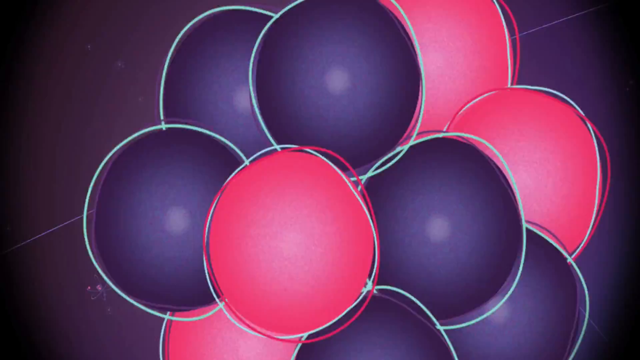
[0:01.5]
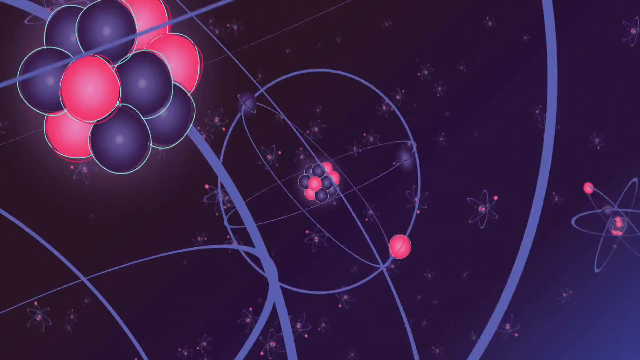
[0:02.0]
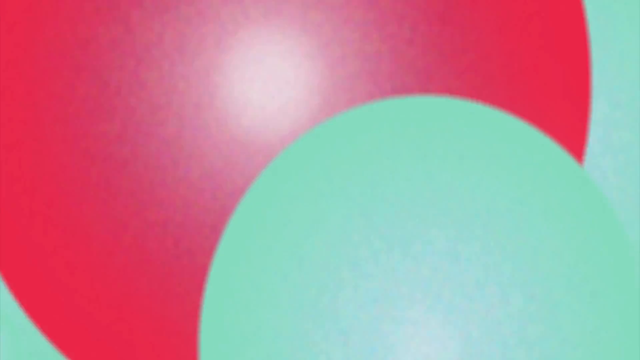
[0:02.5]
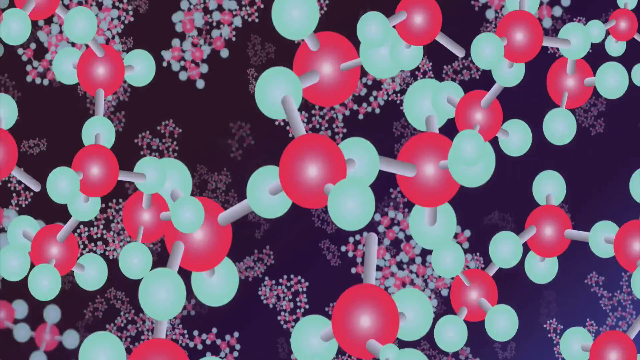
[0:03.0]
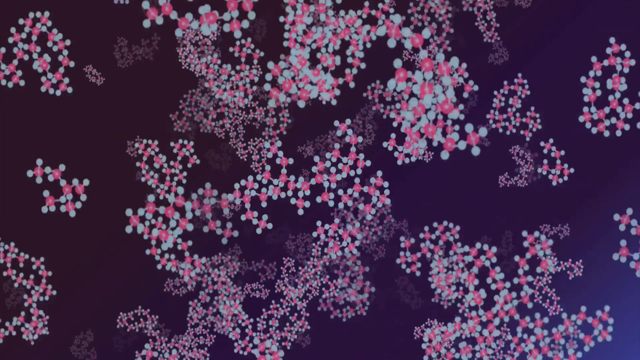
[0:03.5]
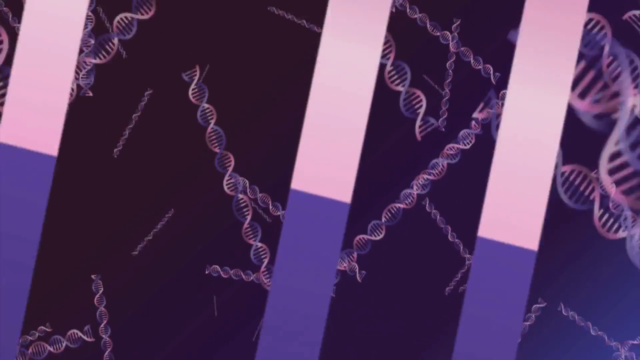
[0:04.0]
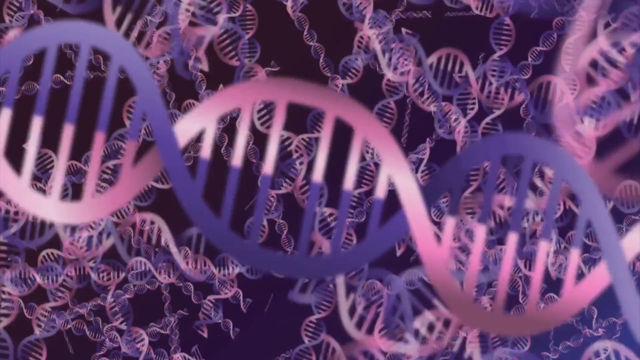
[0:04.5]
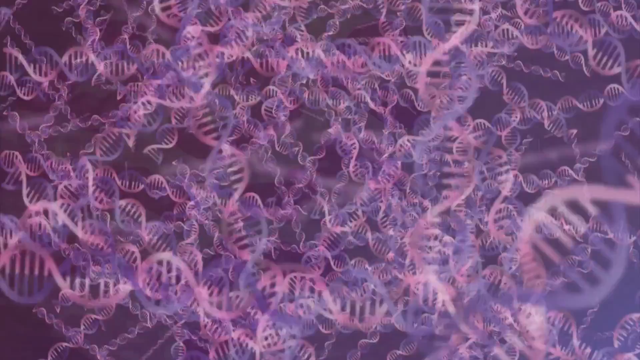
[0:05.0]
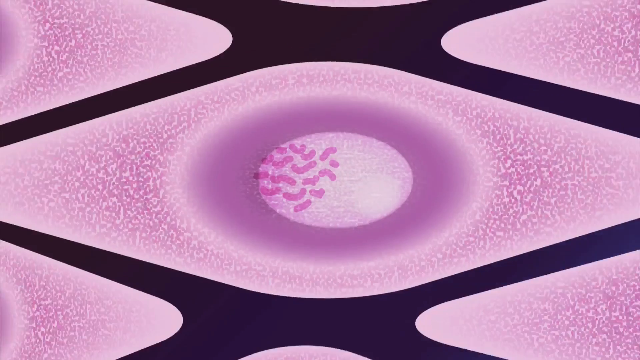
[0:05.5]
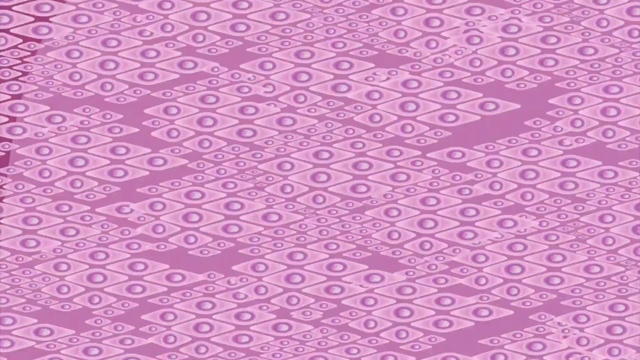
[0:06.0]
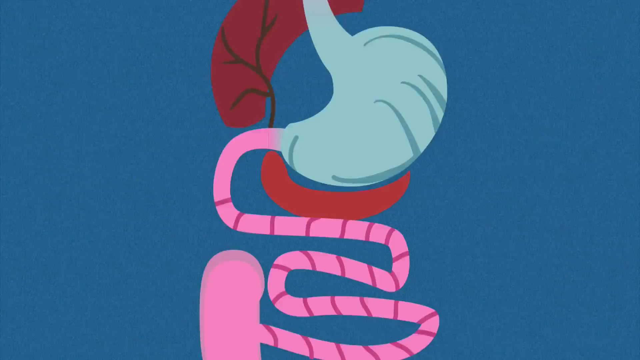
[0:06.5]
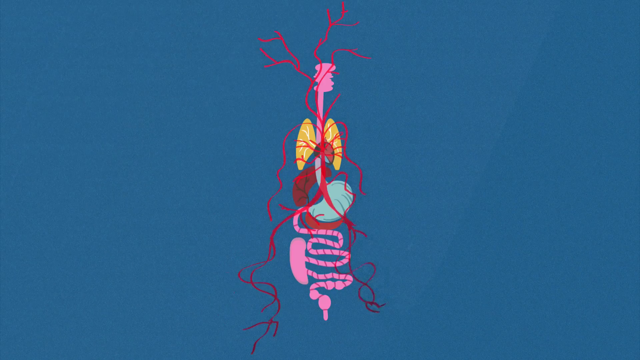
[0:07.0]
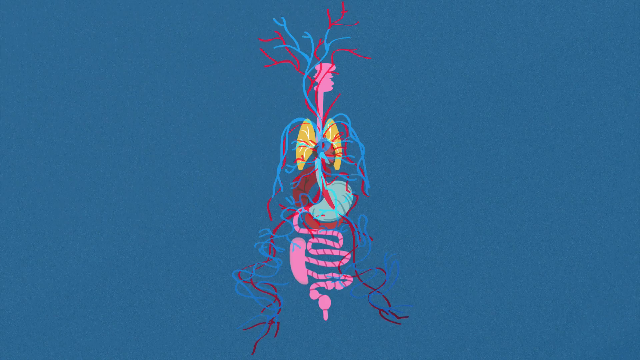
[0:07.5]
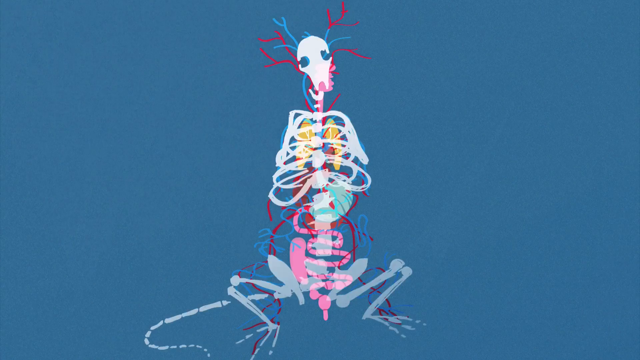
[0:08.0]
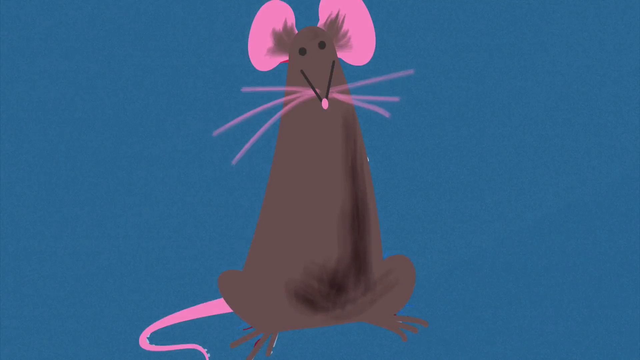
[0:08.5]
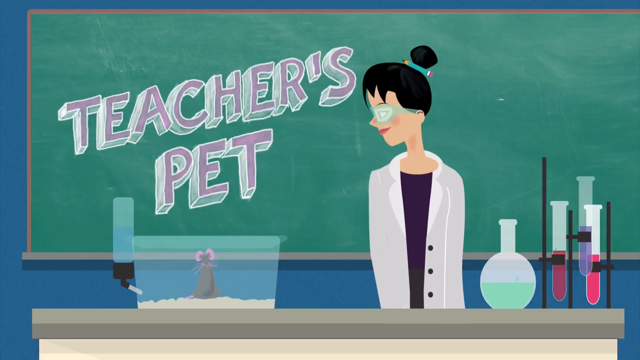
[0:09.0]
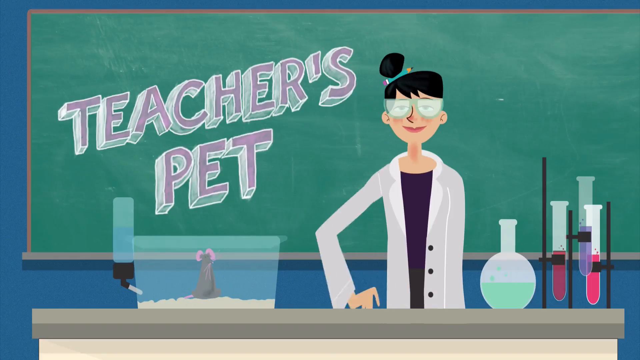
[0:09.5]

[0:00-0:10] Against a black background are what look to be different molecules, black and red with white outlines, with very elongated blue ovals around them. The view continues zooming past other molecules; some move farther apart while others come closer together. Molecules in white and red appear, all joined to each other by connecting lines. Blue and pink DNA patterns follow, then bacteria under a microscope. Next come diamonds, little cells, and then organs, which are overlaid with veins and nerves. A skeleton appears, followed by the skin of a mouse. The view zooms out even farther to show a cartoon woman by a green board.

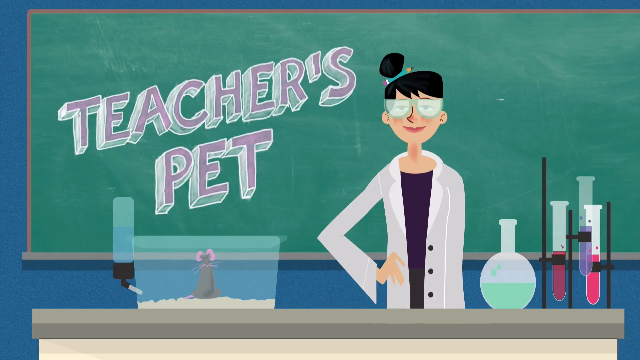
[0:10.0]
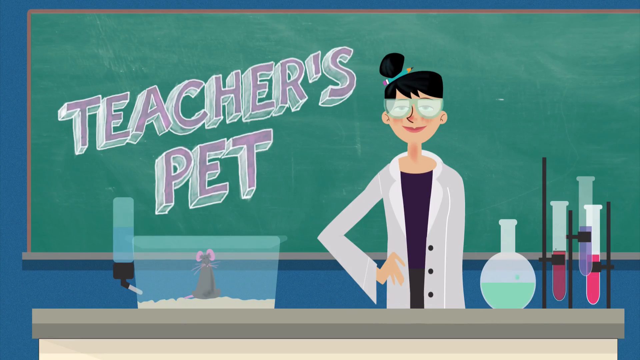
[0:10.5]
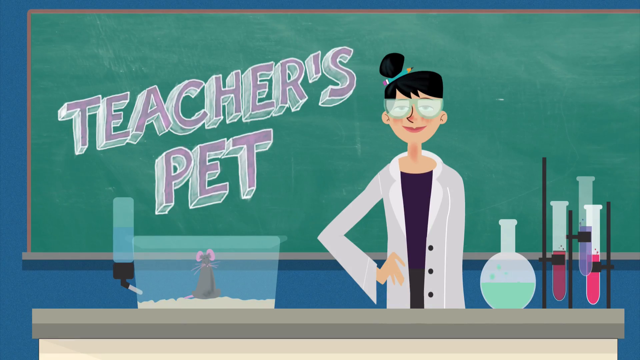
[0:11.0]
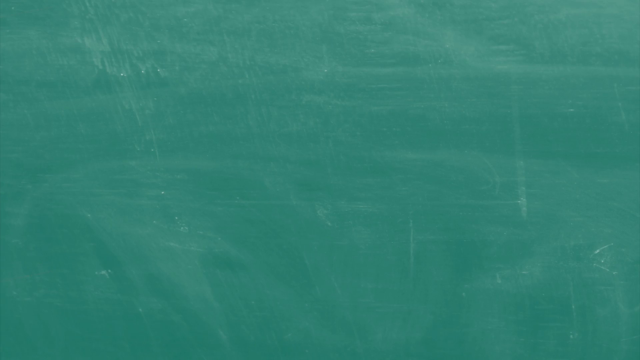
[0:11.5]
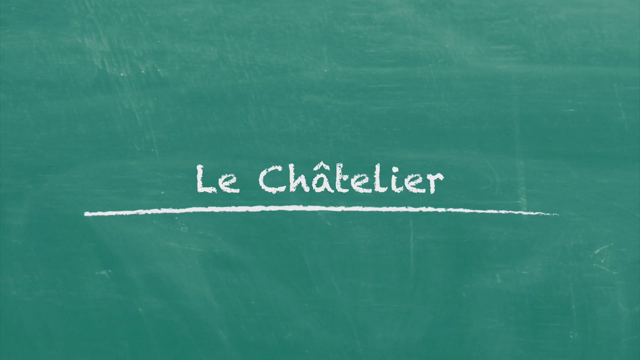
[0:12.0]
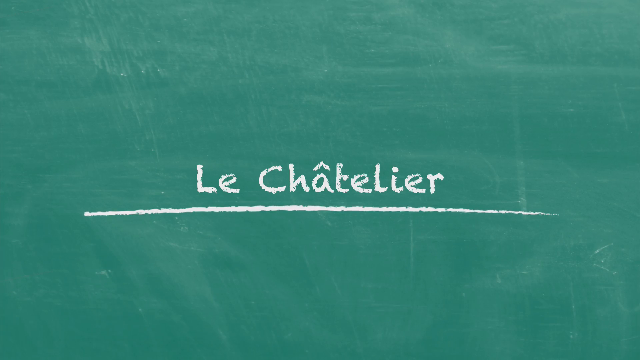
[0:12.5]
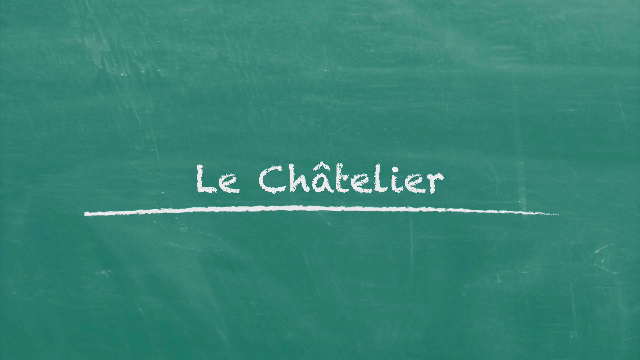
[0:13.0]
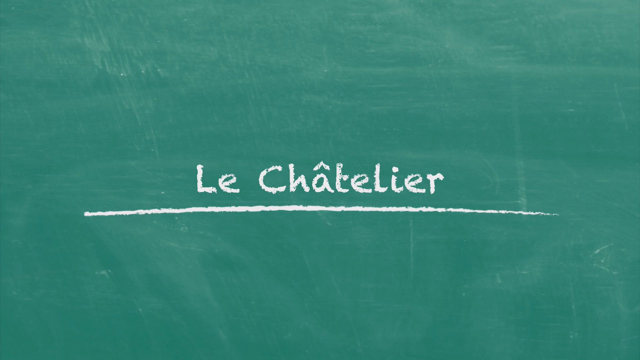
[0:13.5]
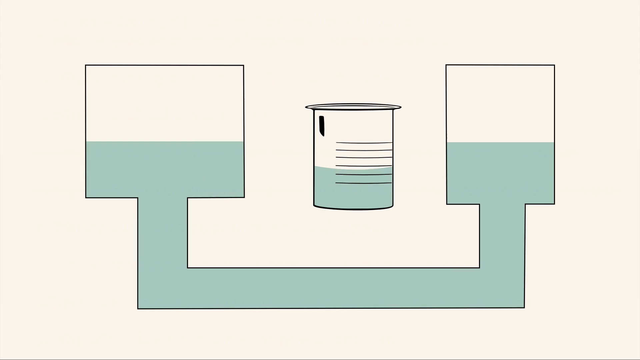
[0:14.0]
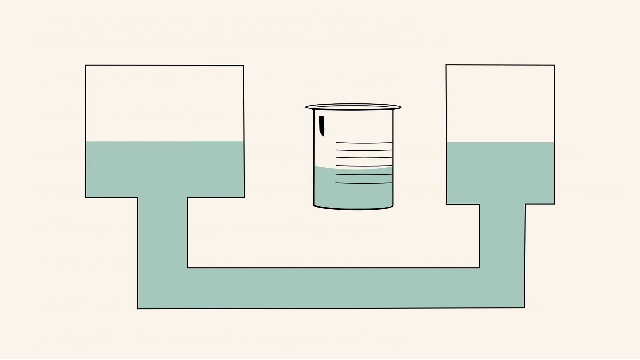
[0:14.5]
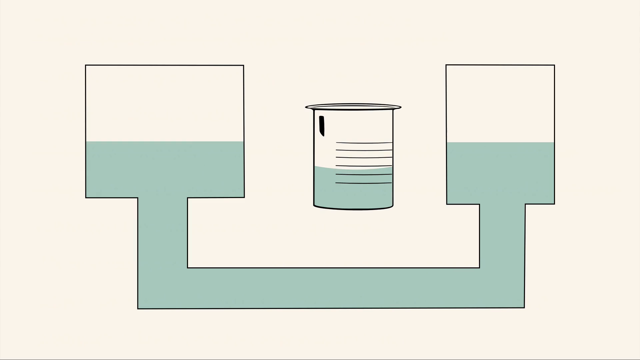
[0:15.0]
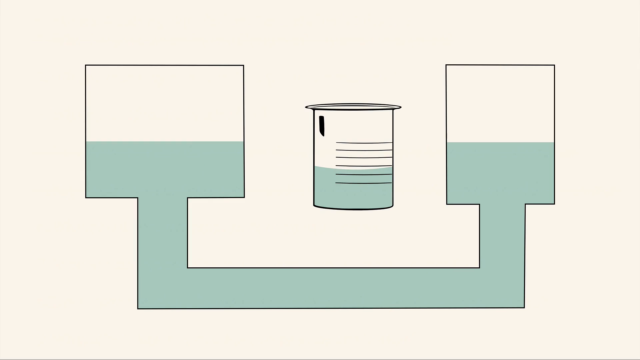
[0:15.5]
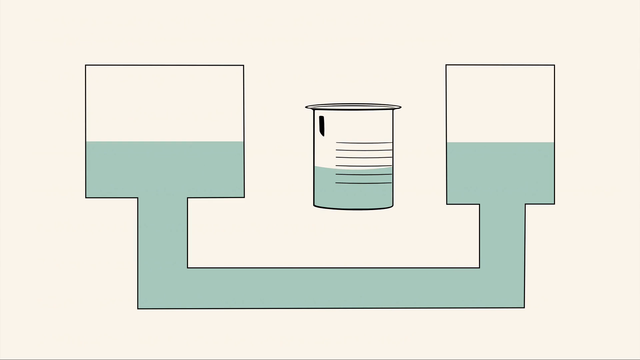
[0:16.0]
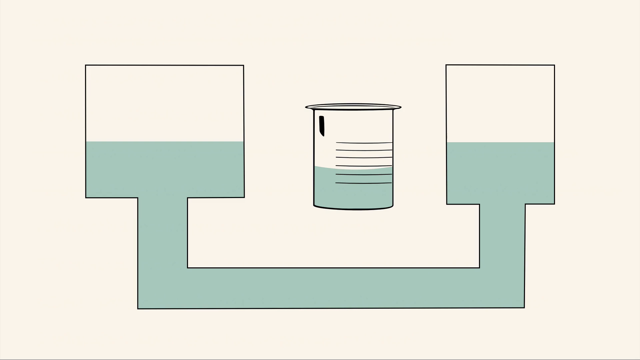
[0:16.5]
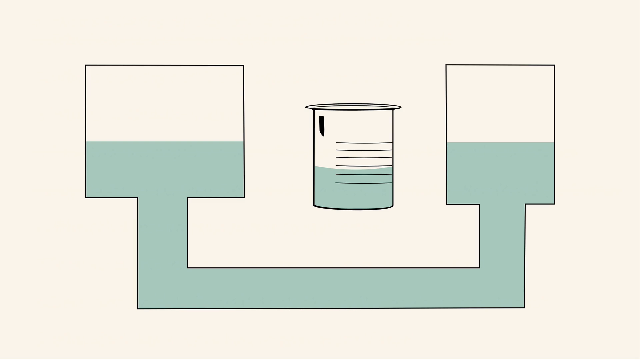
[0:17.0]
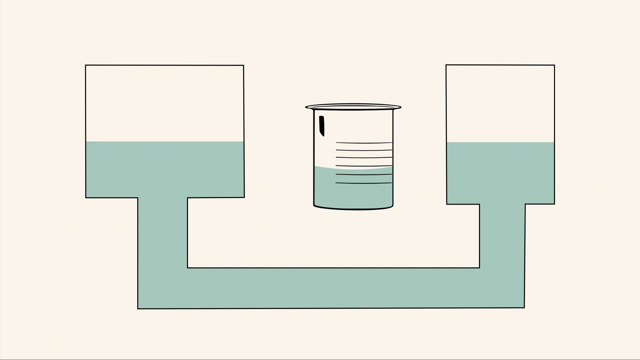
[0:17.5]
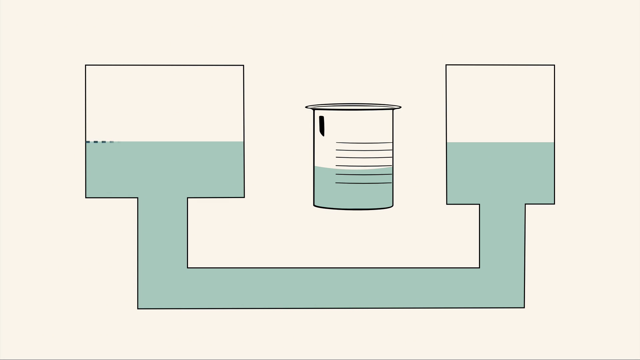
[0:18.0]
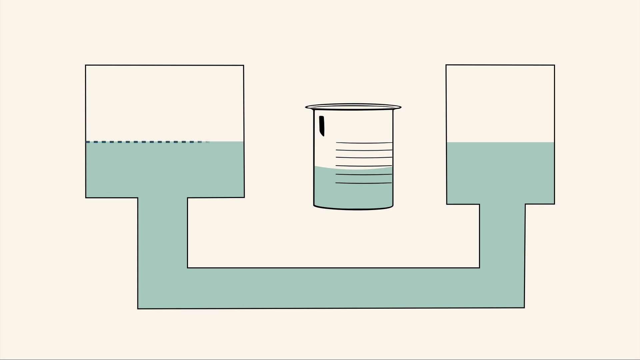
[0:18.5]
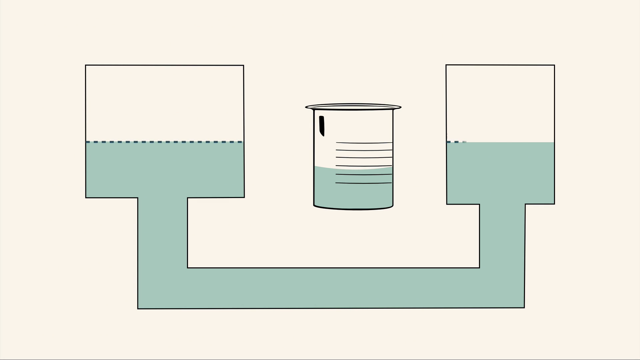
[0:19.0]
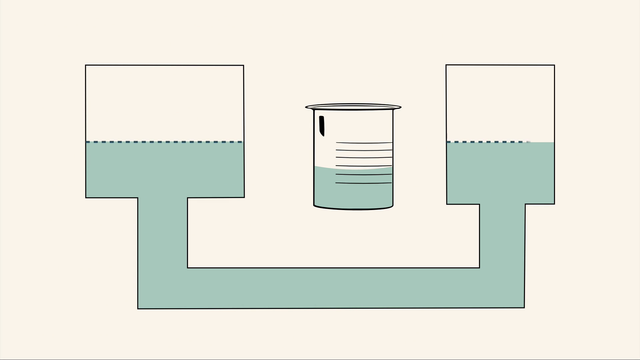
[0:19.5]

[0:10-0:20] On a green board, "teacher's pet" is written in lavender. There is a cage for the mouse along with the mouse's water bottle. A woman with a bun wears goggles and a lab coat. The view zooms in to the chalkboard, where a sun suddenly appears as the woman draws on it. The woman draws Le Chatelier. A rectangle and a thinner rectangle appear, connected to each other, with a flask in the middle; they all seem to have water in them. The flask is lifted up and begins to pour into the rectangles.